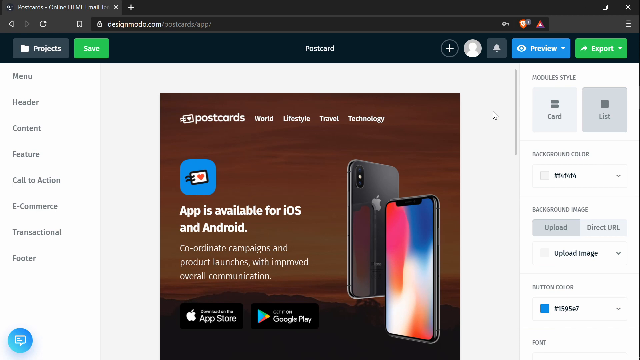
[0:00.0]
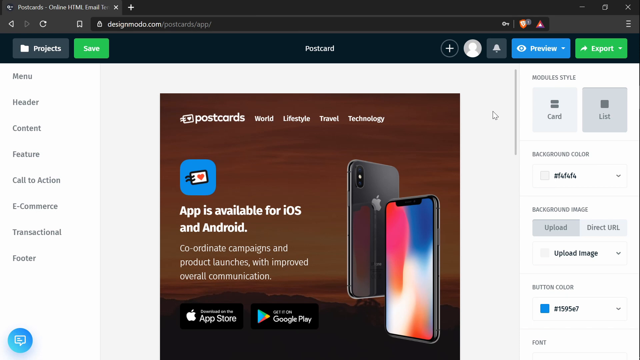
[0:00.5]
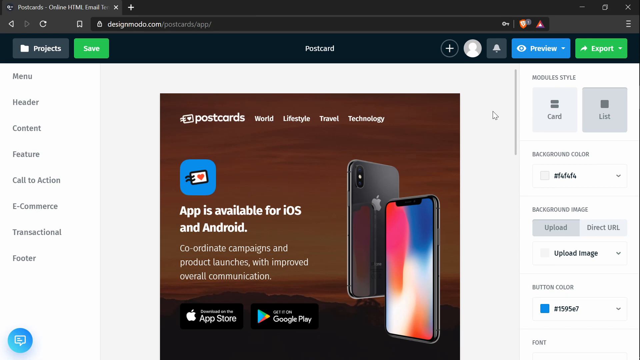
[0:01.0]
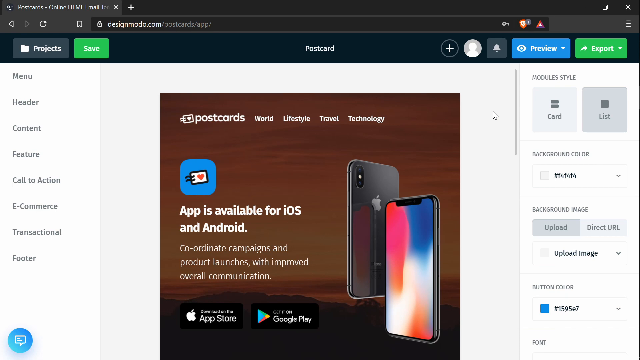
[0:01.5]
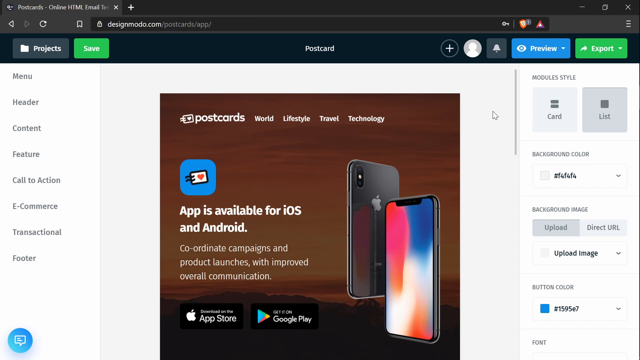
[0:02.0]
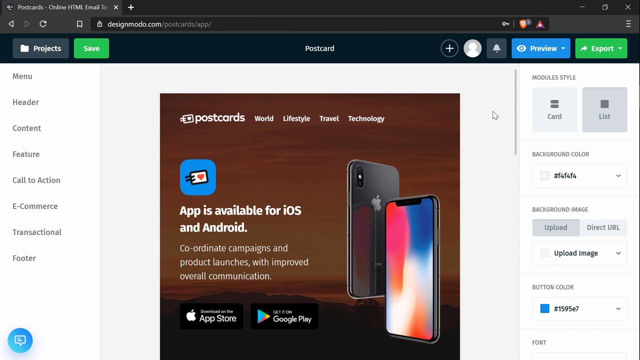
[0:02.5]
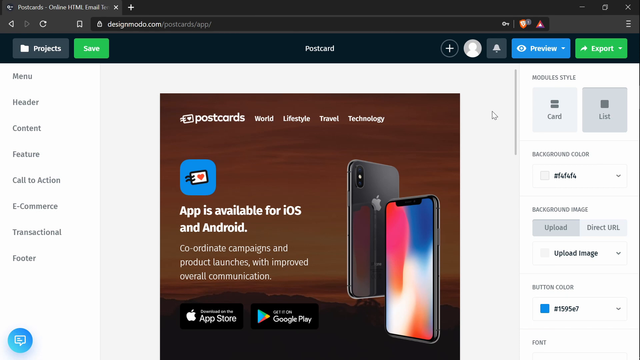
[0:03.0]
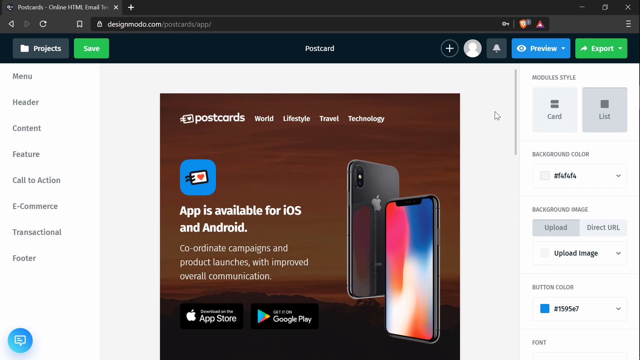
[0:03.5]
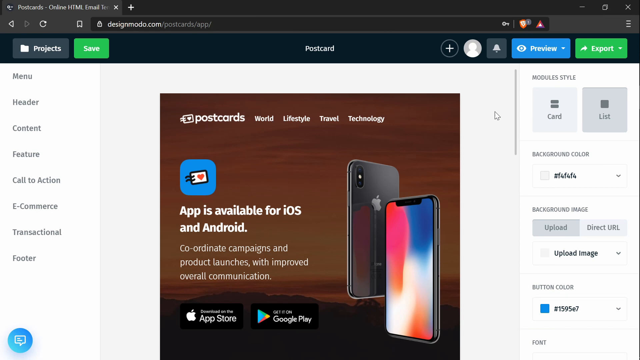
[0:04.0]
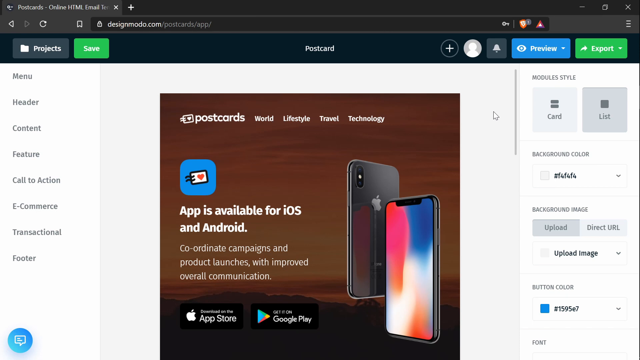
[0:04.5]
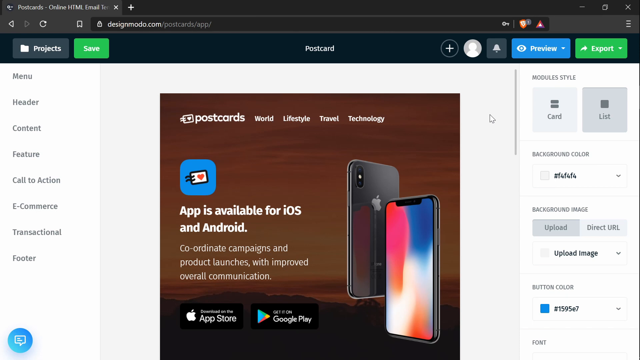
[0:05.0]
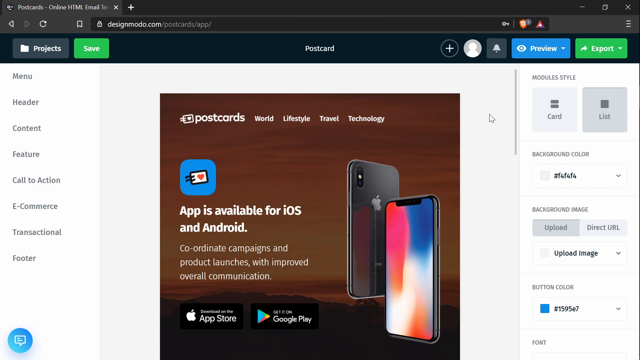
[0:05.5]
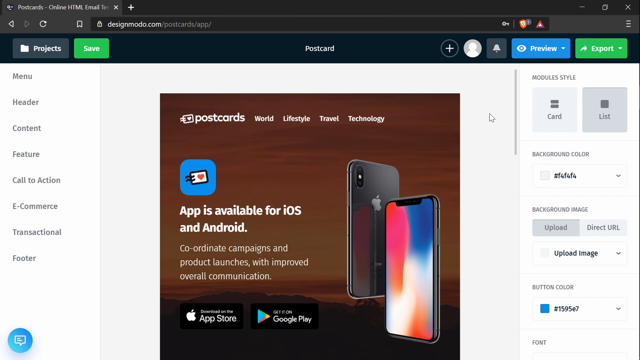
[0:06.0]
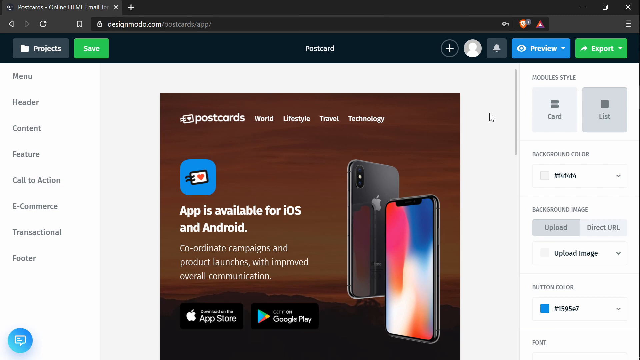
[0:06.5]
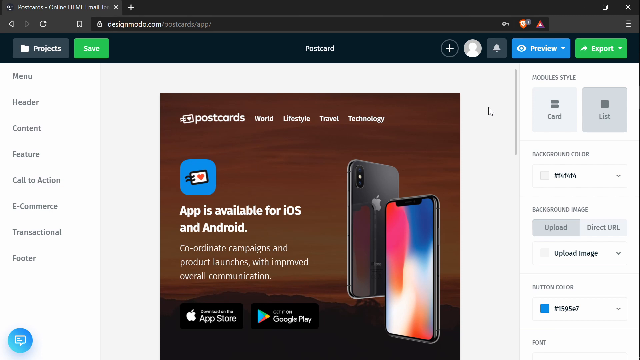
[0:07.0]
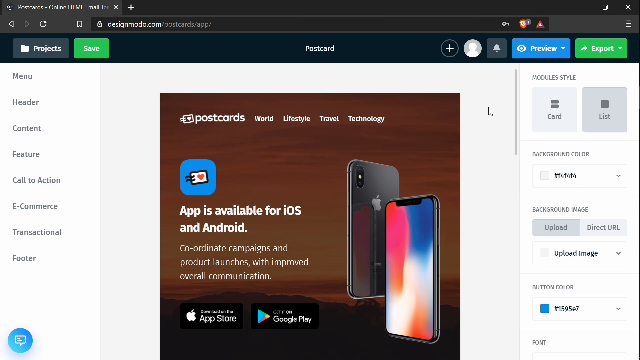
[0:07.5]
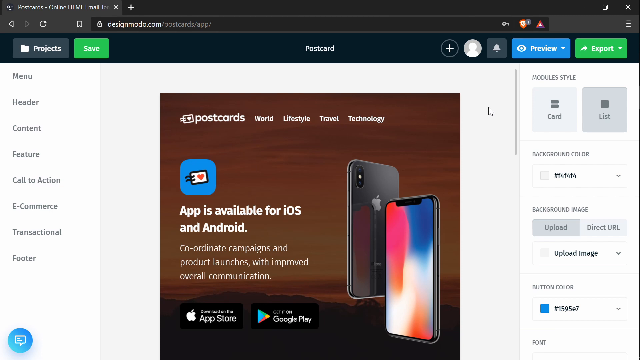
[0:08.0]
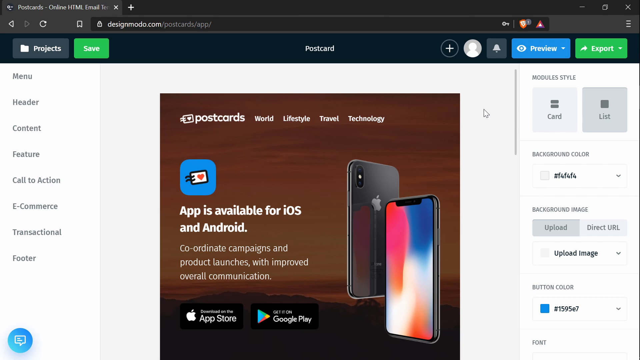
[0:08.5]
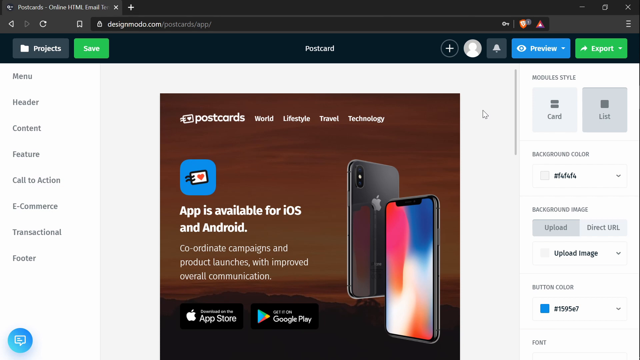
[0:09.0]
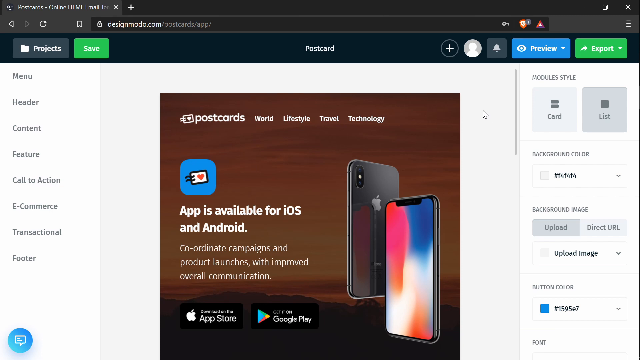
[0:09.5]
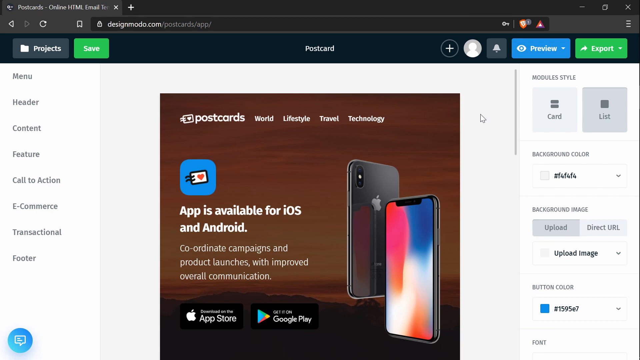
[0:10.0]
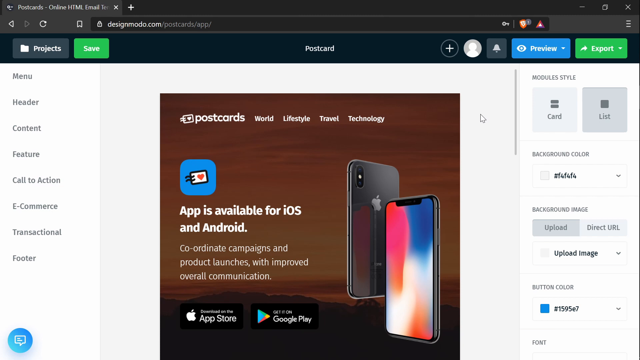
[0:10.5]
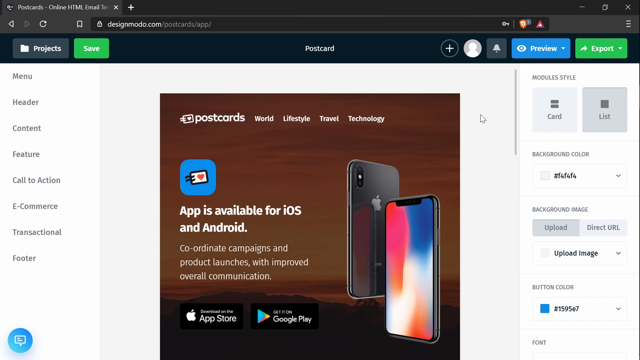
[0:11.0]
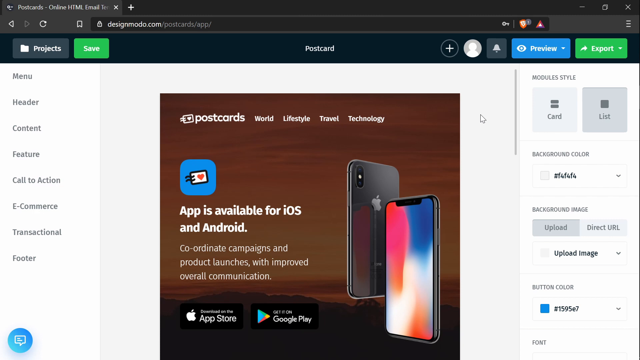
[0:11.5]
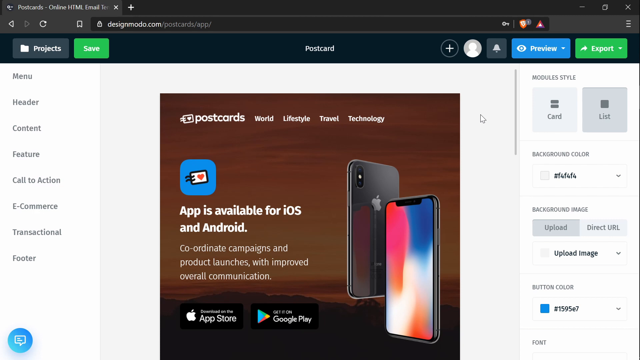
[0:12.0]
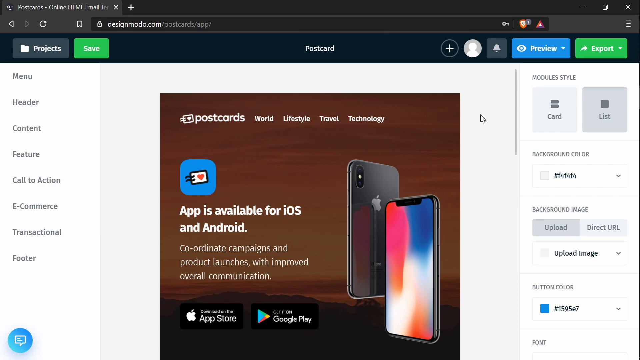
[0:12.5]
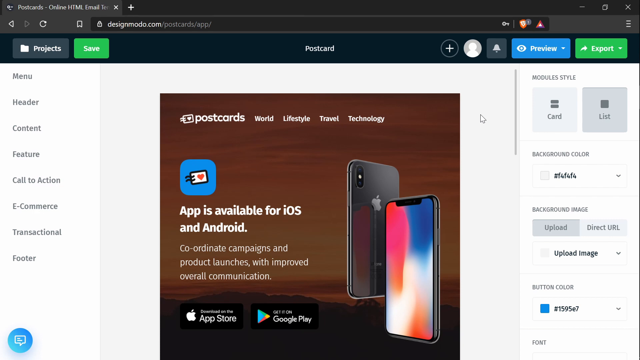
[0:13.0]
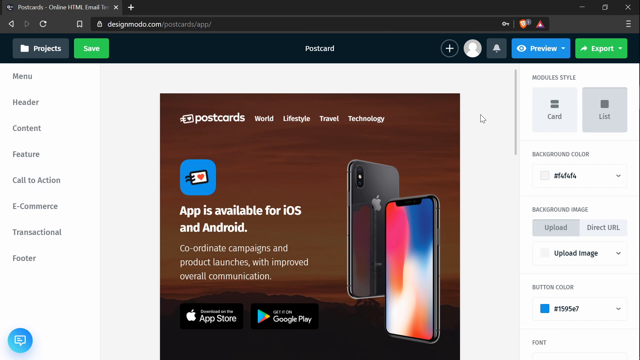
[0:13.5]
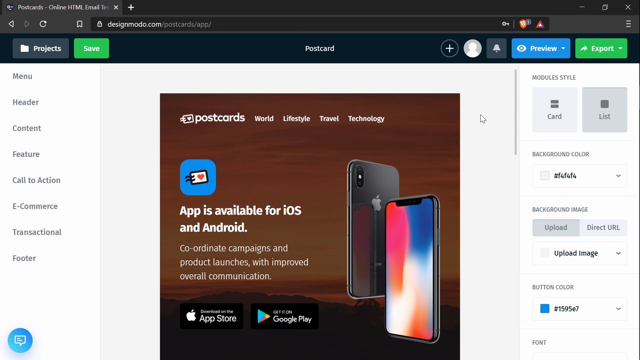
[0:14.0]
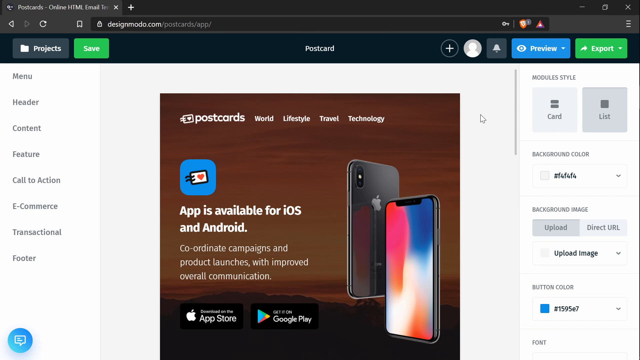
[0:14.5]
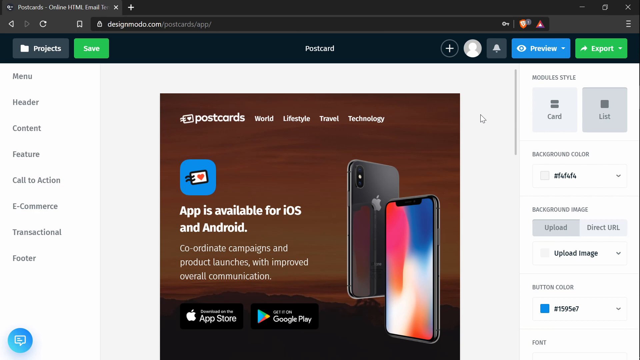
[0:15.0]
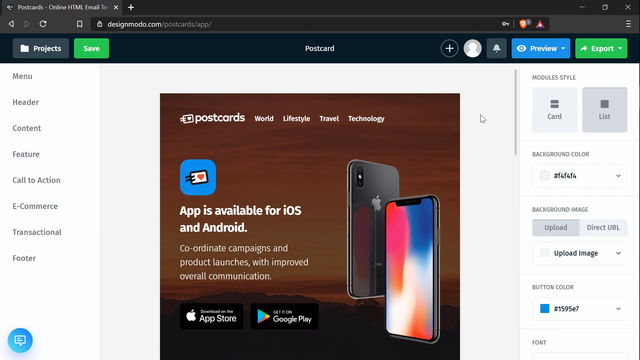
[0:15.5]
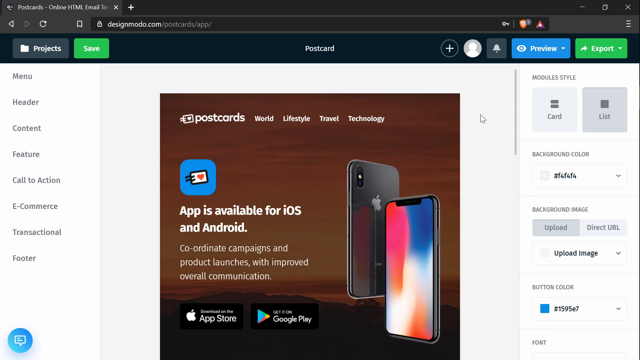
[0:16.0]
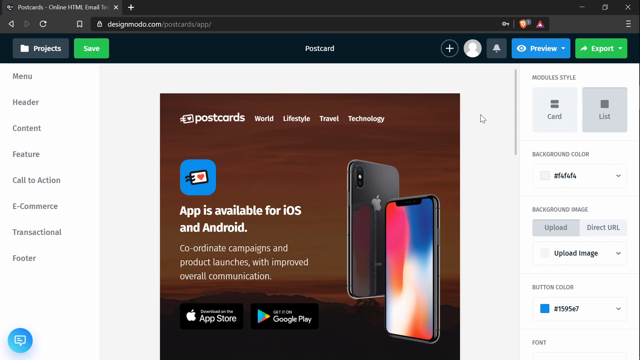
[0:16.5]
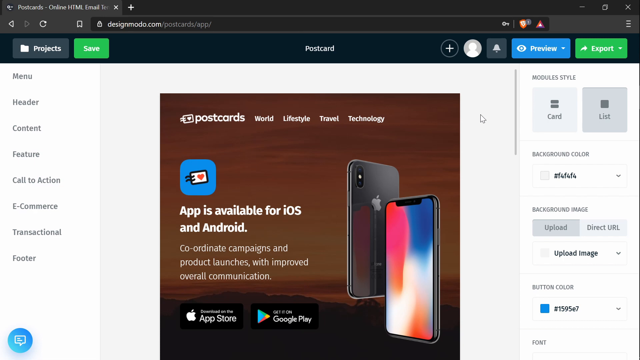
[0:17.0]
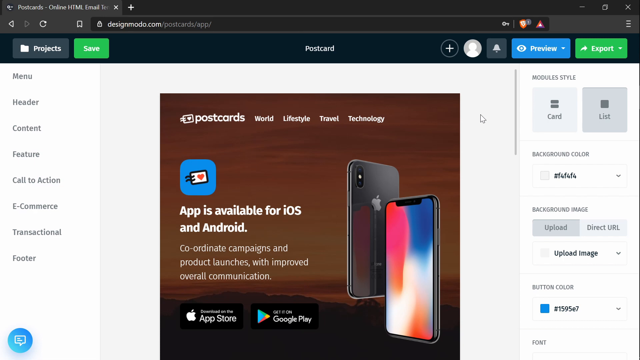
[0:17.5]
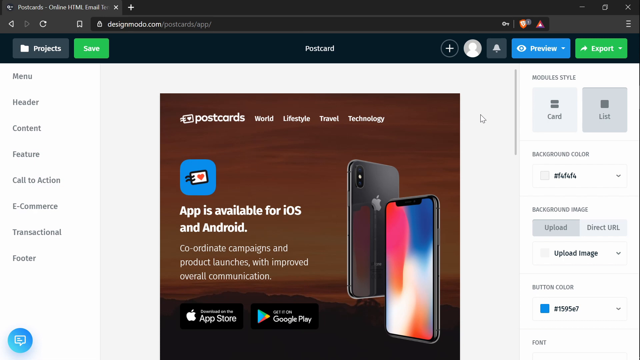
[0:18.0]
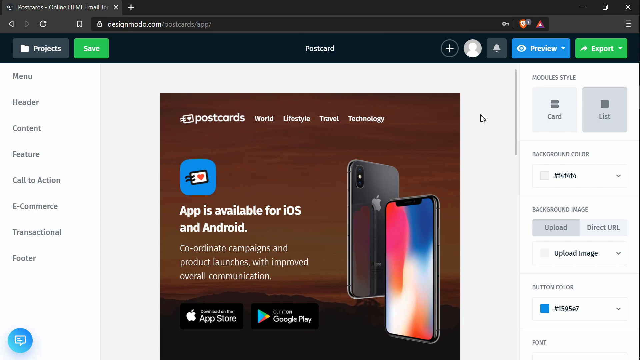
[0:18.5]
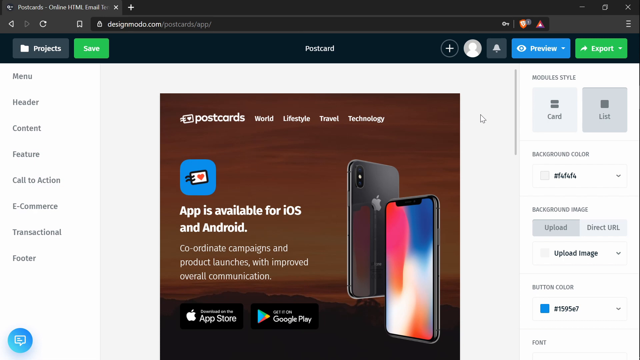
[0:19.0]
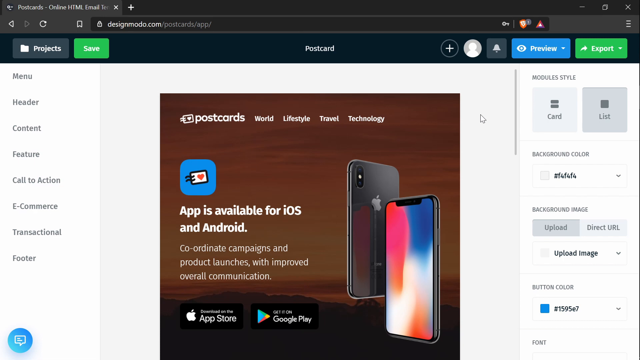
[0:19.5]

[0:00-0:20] A web page is open on a computer, on the website designmodo.com. The browser tab in the top left corner indicates postcards online HTML, and the postcard page is displayed. On the left-hand side are multiple options: menu, header, content, feature, call to action, e-commerce, transactional, and footer. On the right-hand side are module style, background color, background image, and button color settings. In the middle is what looks like an advert for an app called Postcards, stating that the app is available for iOS and Android. On its right side are images of two iPhones against a sunset background with a landscape at the bottom, and it offers downloads from either the App Store or Google Play. In the top right, "preview" appears in blue and "export" in green.